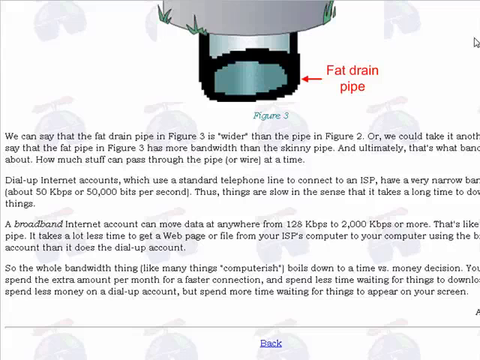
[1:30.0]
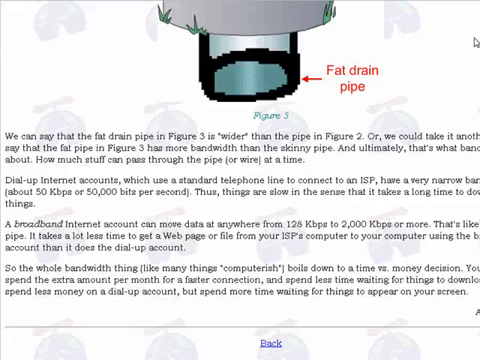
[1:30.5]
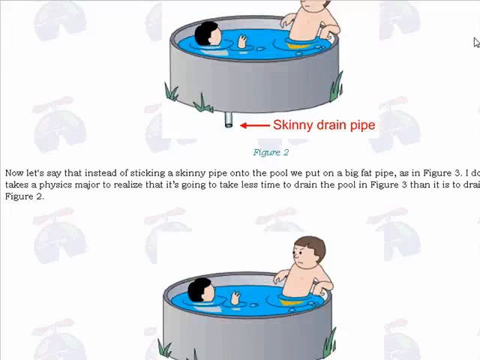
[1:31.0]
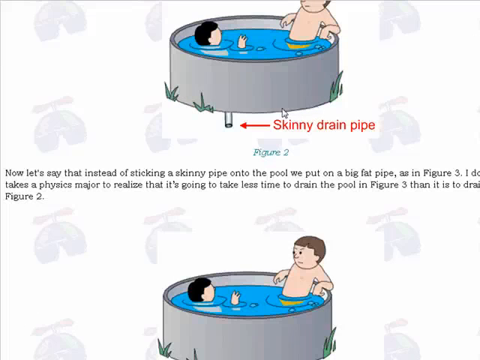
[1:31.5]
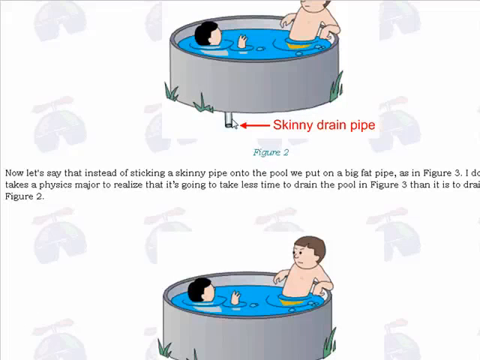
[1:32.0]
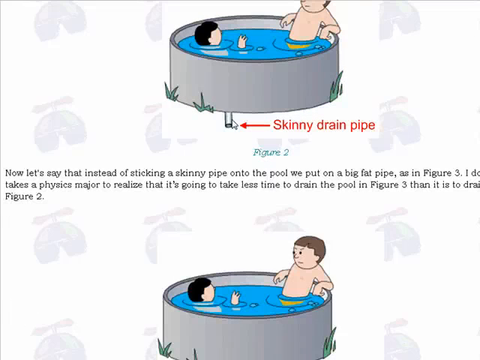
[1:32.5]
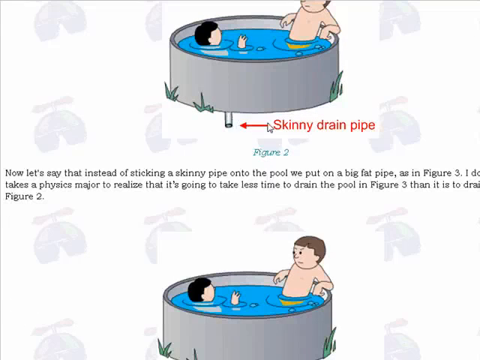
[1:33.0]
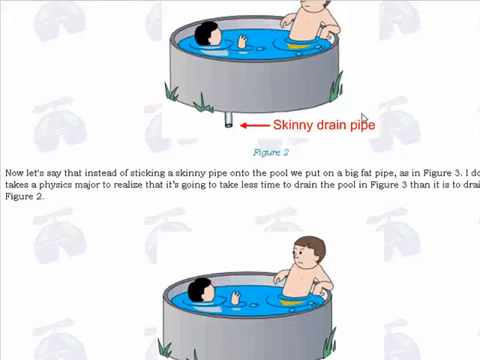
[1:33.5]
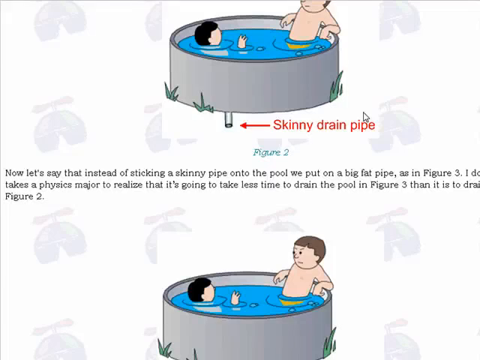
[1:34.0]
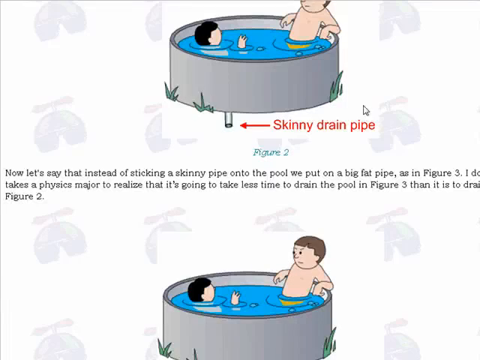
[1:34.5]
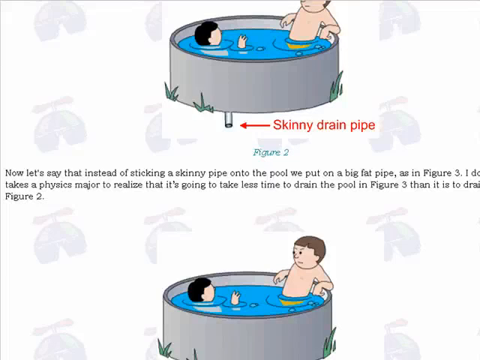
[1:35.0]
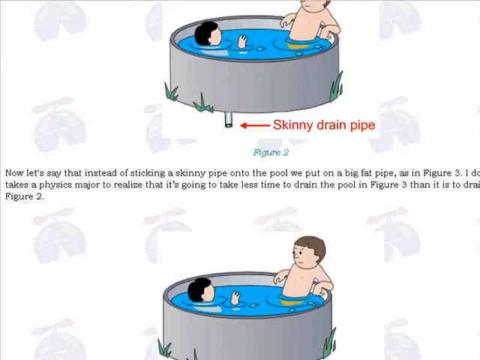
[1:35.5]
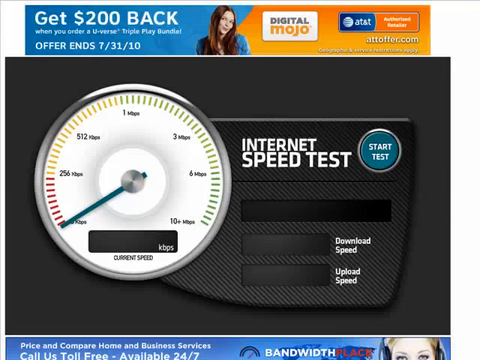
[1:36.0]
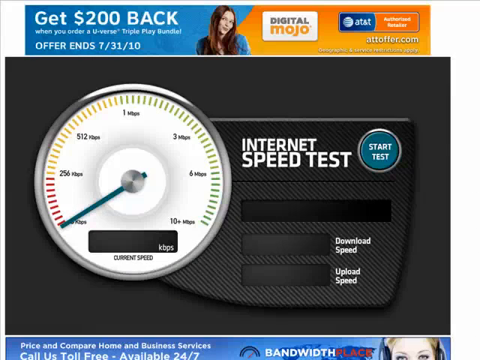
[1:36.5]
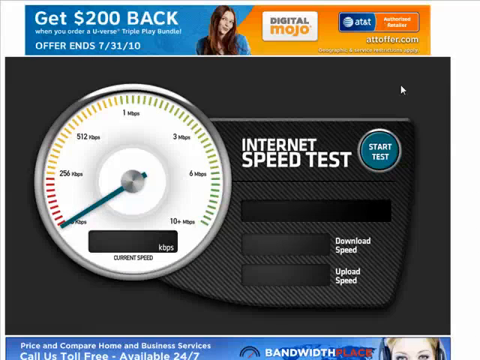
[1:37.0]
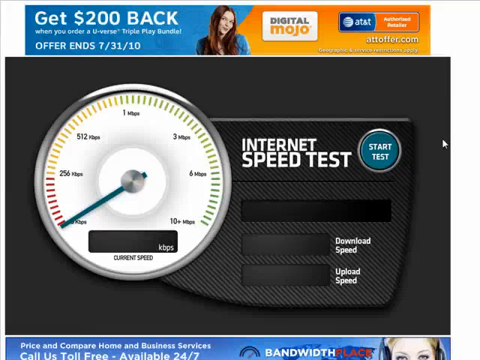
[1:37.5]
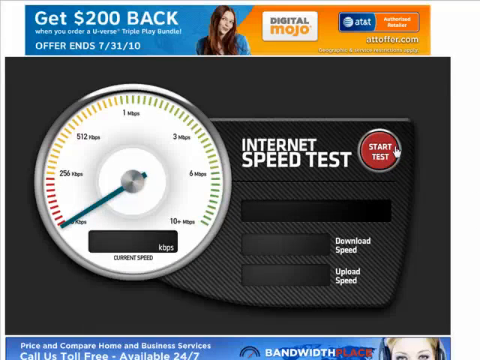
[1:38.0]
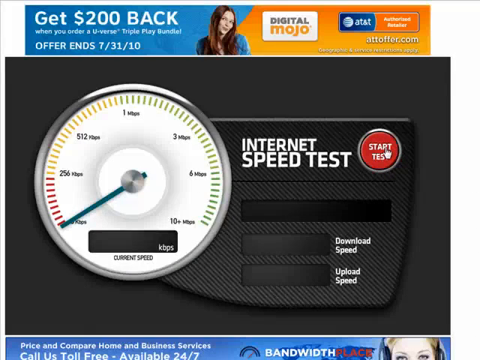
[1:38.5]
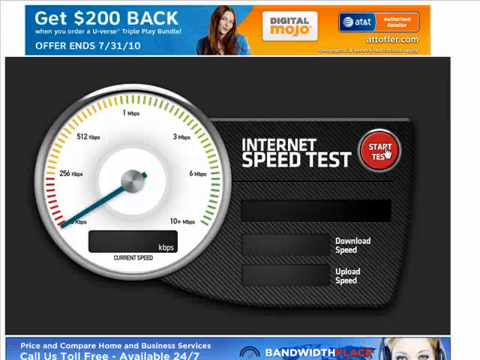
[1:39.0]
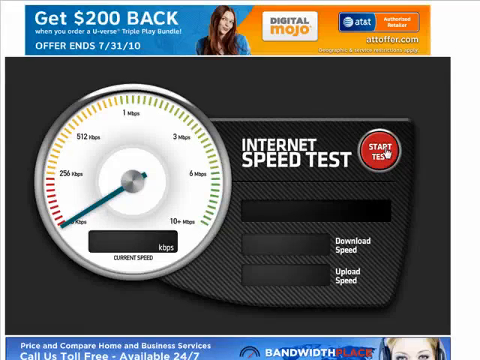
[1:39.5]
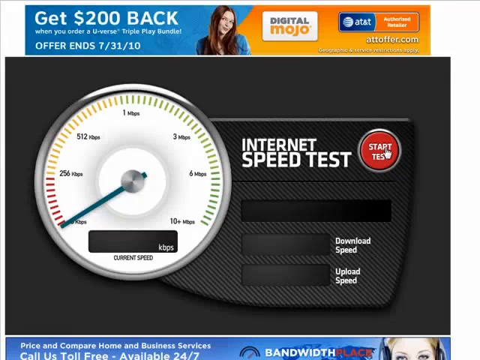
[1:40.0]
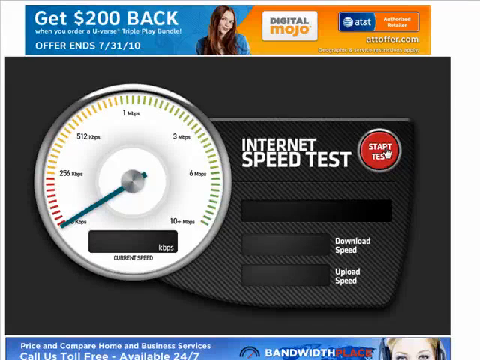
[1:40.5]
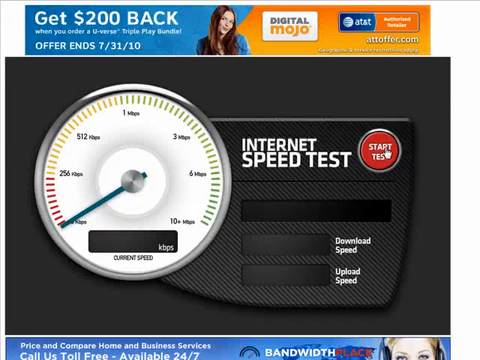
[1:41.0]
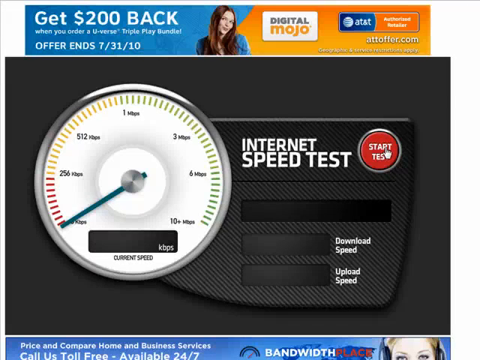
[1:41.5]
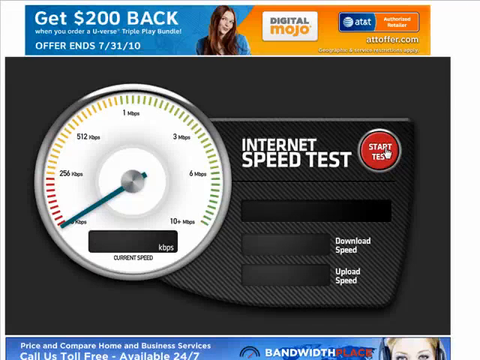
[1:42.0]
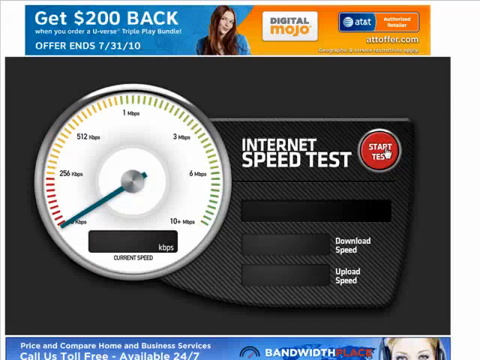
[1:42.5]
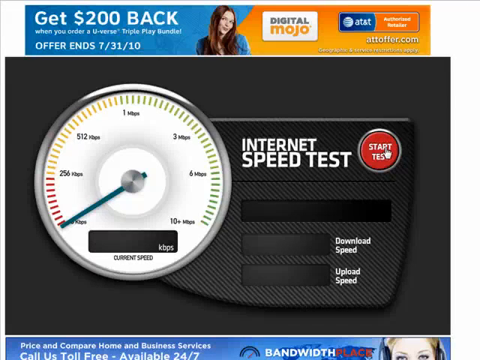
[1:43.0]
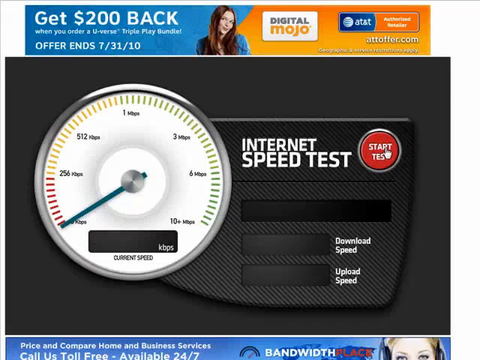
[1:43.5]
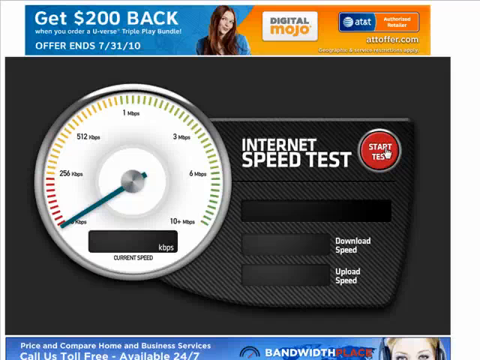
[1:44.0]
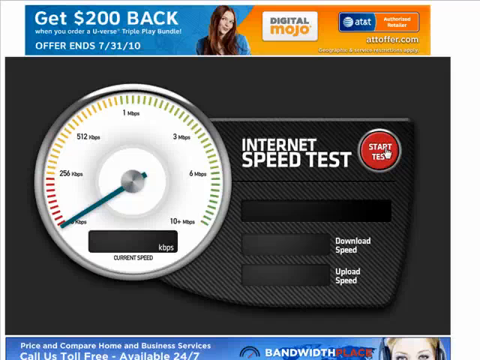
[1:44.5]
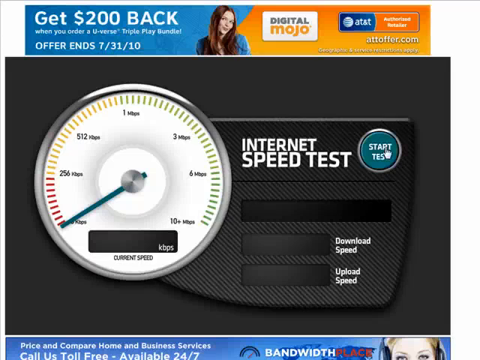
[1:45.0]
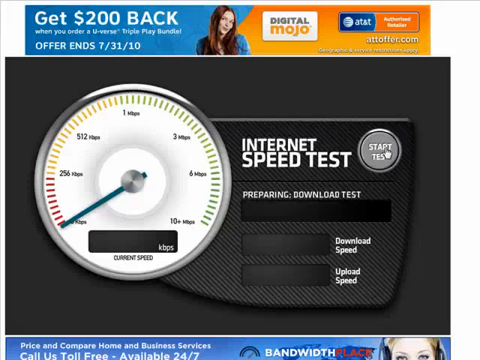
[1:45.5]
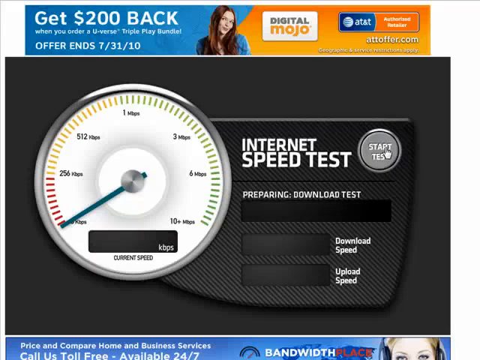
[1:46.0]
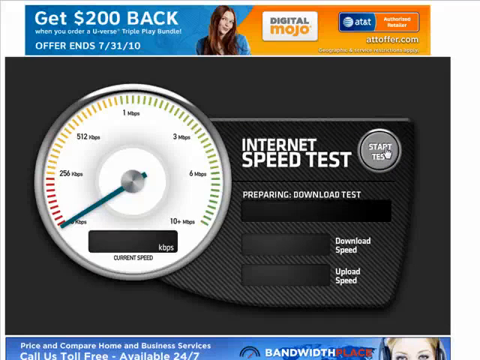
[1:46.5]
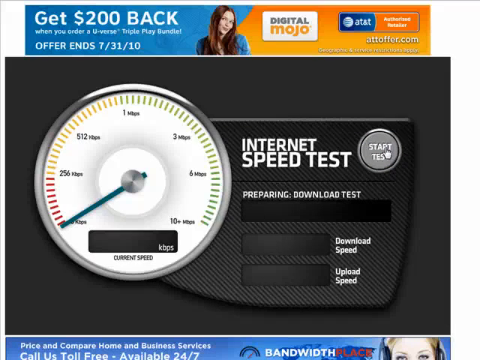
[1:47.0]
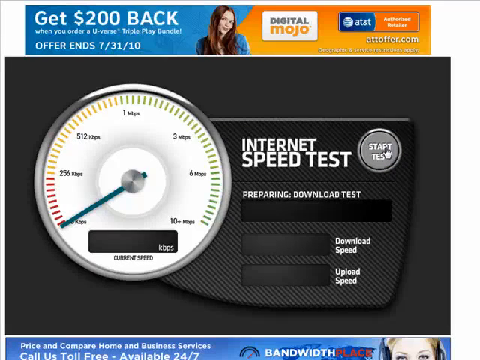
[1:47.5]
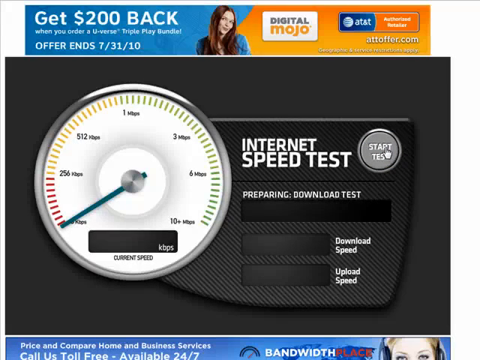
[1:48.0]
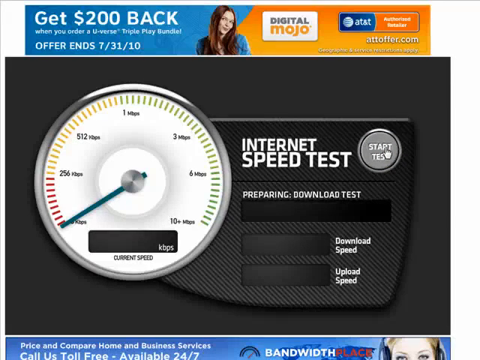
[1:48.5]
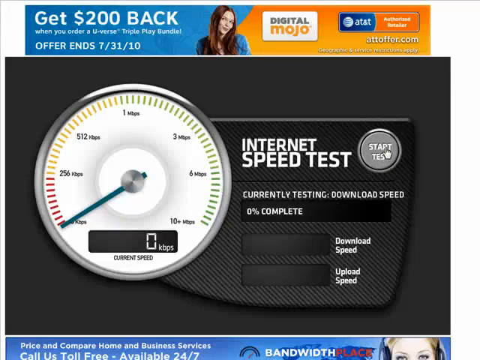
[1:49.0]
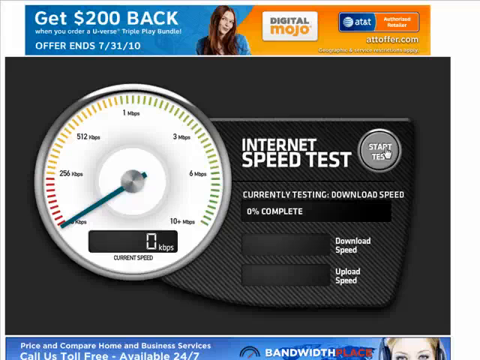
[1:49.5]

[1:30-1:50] Just the top of the bigger drain pipe is barely visible, and the cursor is on the right side near the top right corner. The page scrolls back up to the pool with the skinny drain pipe under it, a red arrow to the right pointing at it labeled "skinny drain pipe," and below that "figure two" in blue, with one paragraph of information underneath. The cursor moves to just below the pool, right above the arrow, then to the diagram of the skinny drain pipe, hovers there for a moment, moves to the word "skinny," stops for a second, moves right to just above "pipe," and then moves up off the screen. A different page appears with an all-white background. Across the top is an advertisement for Digital Mojo, about an inch in from the left and the right, with a woman in the center; its left half is blue and its right half is orange. On the left it shows how much you get back and when the offer ends, with other links on the right. Below is a black-background area that looks almost like the inside of a car. On the left is a big circle with a silver border and white inside, with "KBS" in it. To the right is "Internet Speed Test" and a blue "Start Test" button, with three screens underneath reading "Download Speed" and "Upload Speed." The cursor clicks the blue button, which turns red, hovers over it for a moment, then clicks it again, and it turns gray. More information then comes up below it.